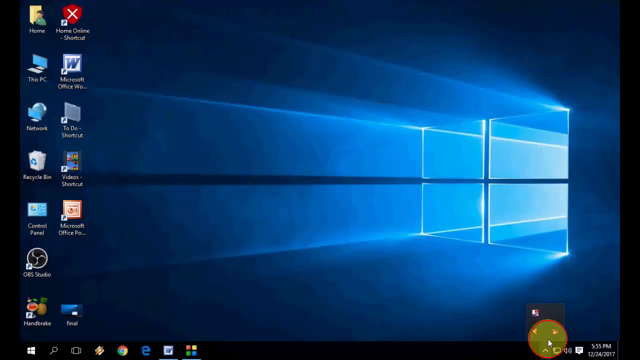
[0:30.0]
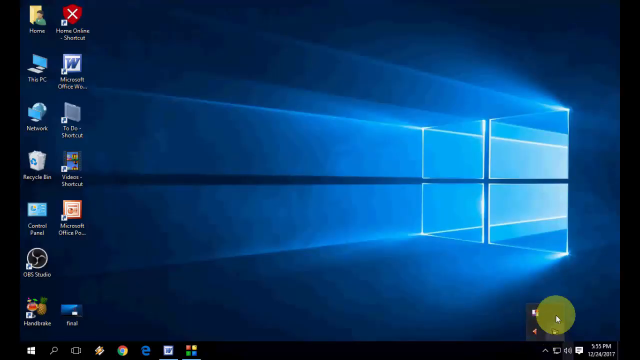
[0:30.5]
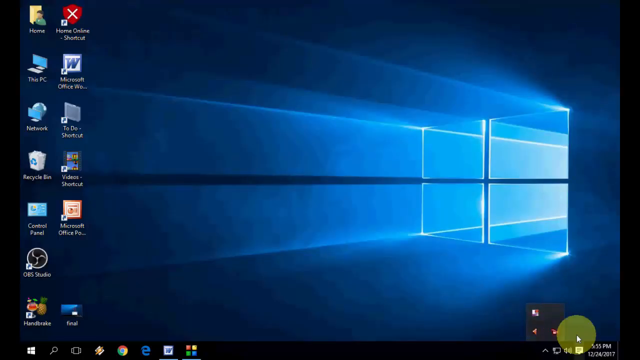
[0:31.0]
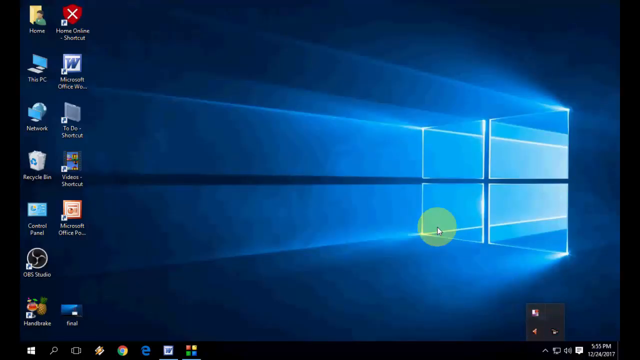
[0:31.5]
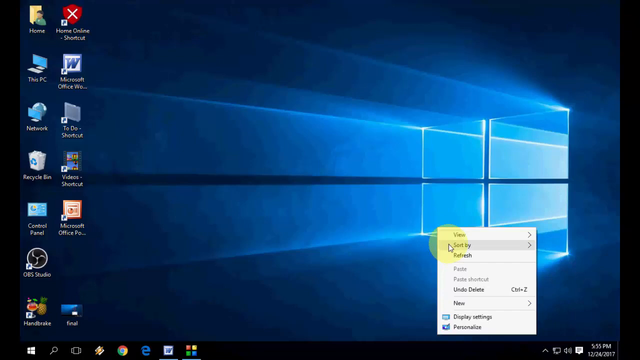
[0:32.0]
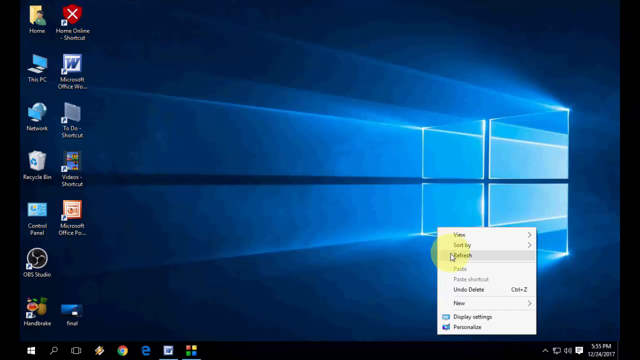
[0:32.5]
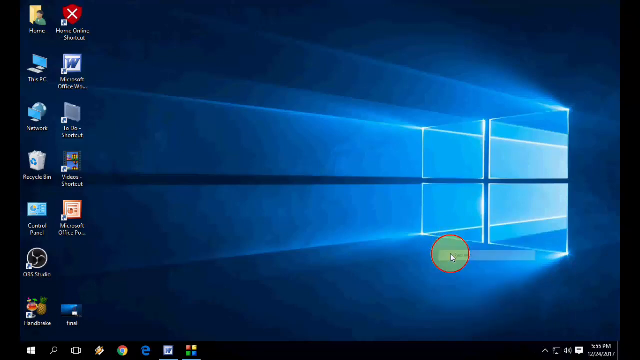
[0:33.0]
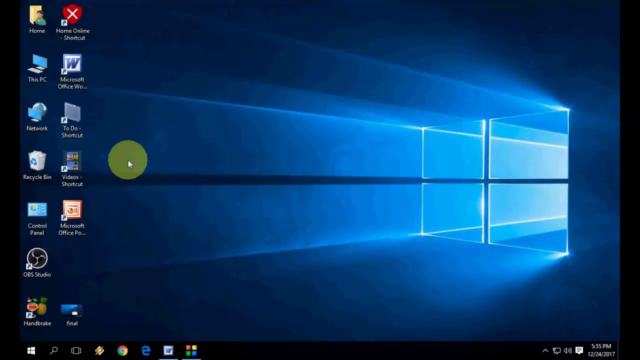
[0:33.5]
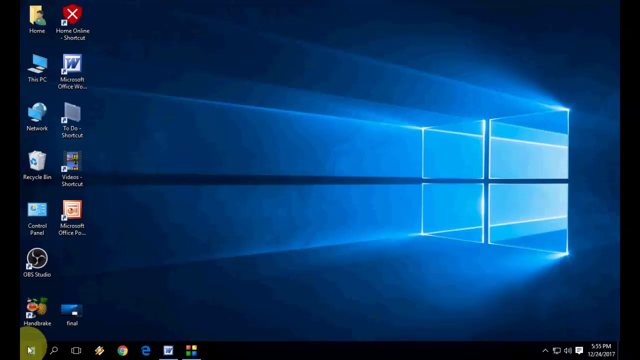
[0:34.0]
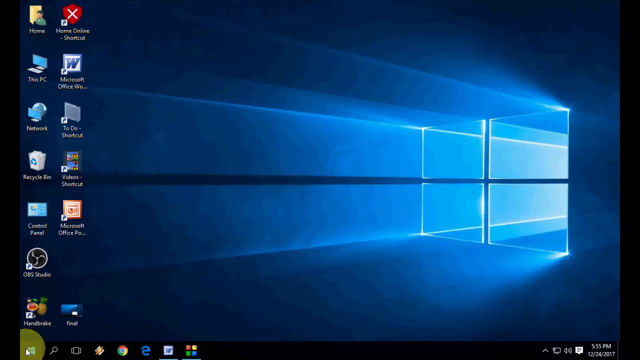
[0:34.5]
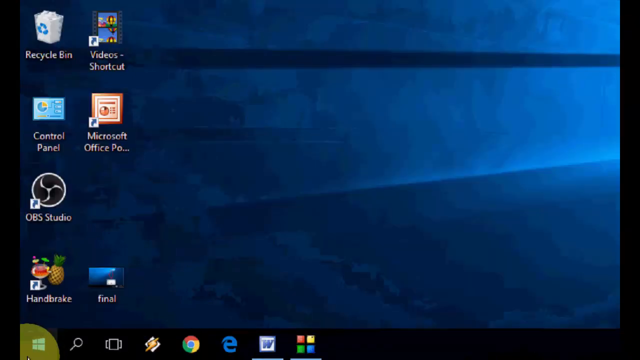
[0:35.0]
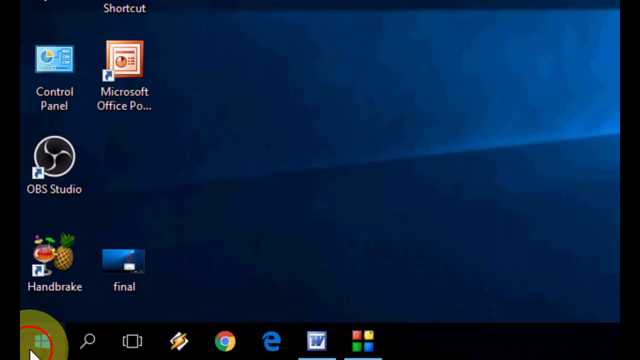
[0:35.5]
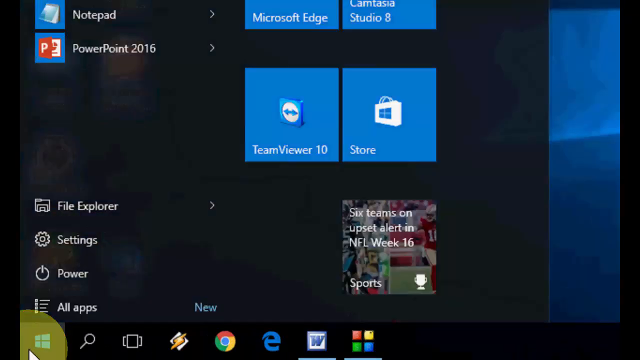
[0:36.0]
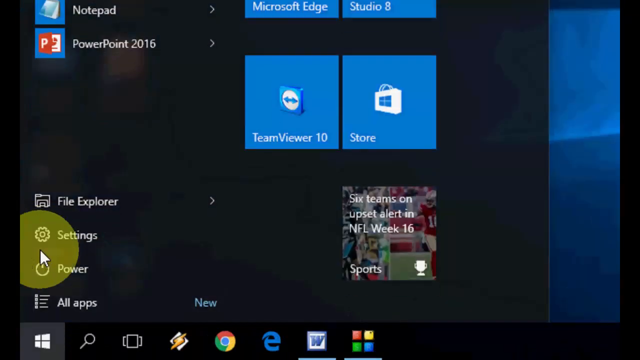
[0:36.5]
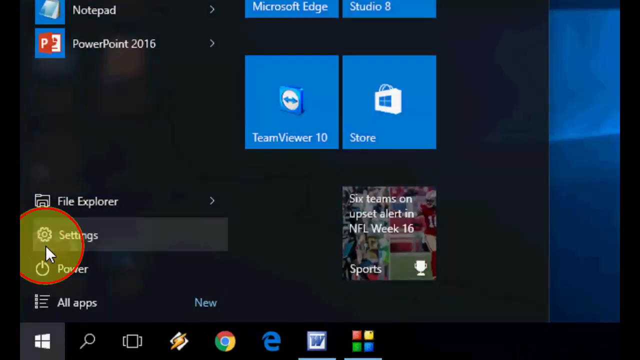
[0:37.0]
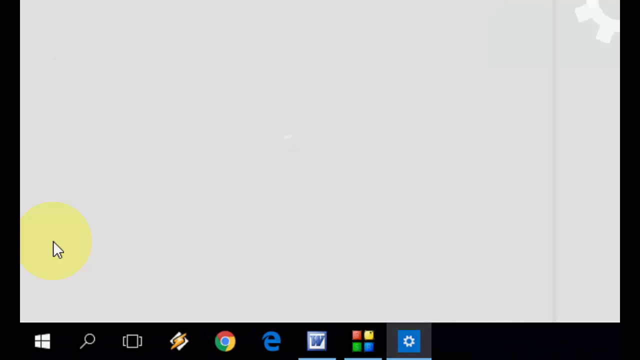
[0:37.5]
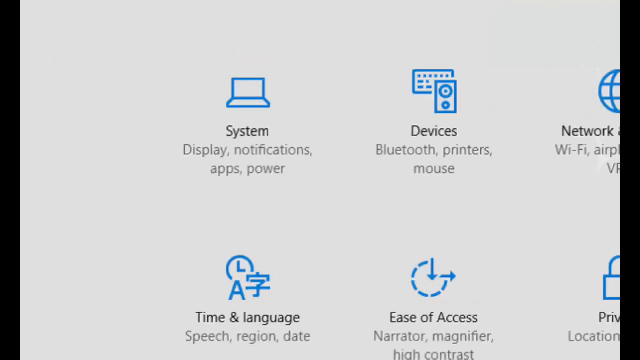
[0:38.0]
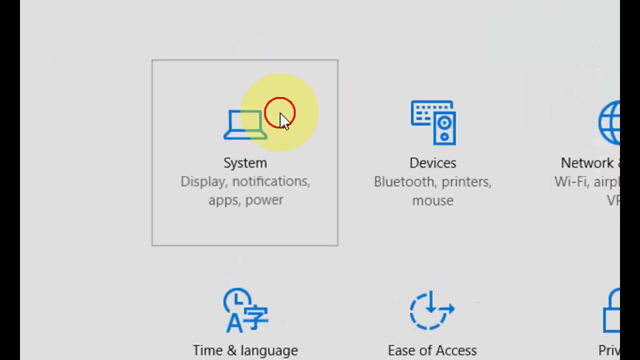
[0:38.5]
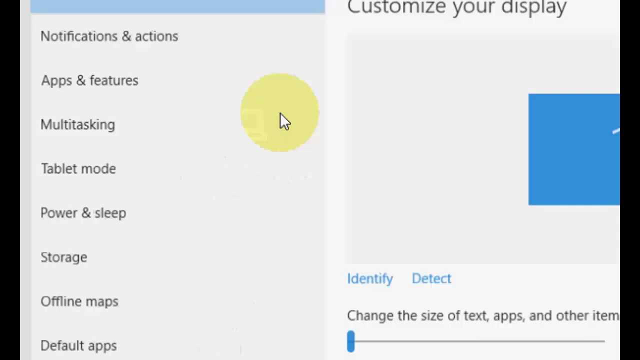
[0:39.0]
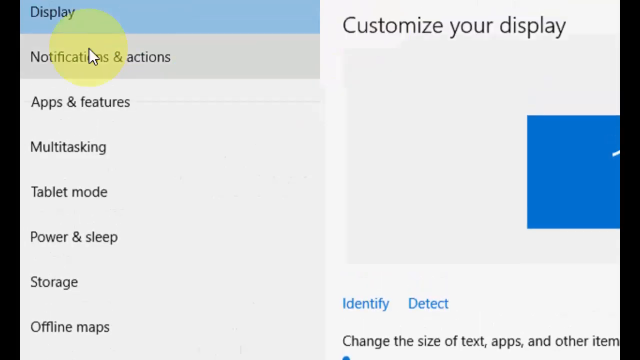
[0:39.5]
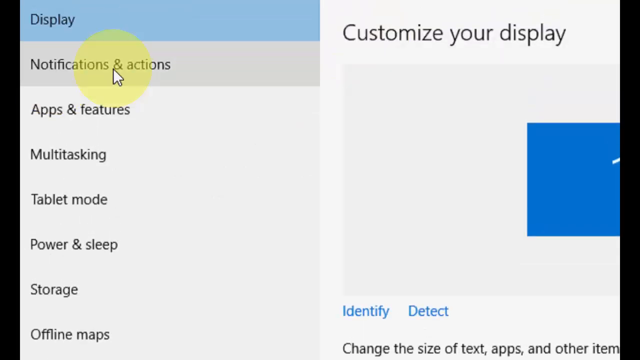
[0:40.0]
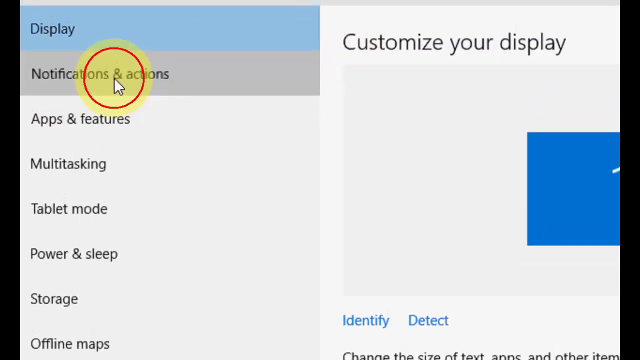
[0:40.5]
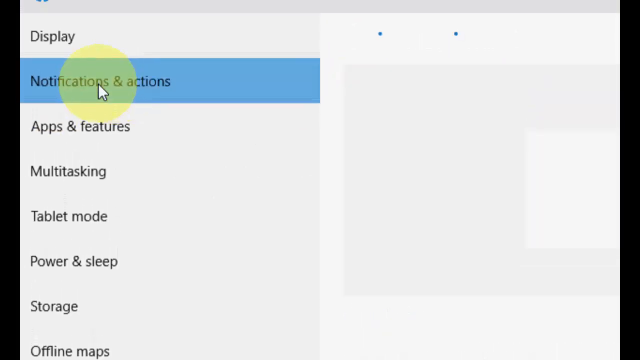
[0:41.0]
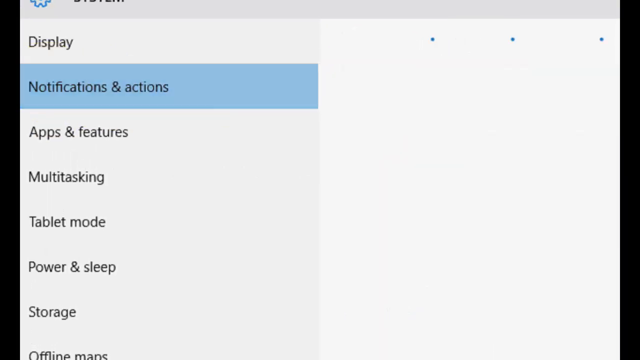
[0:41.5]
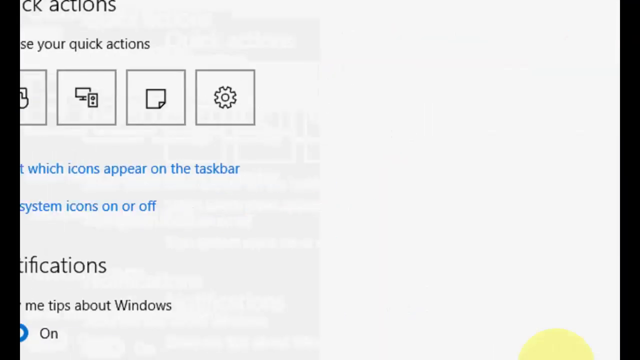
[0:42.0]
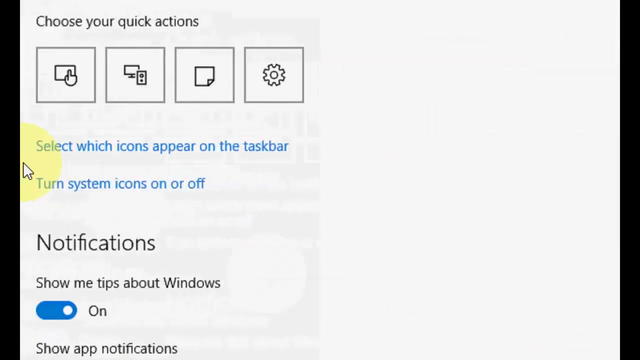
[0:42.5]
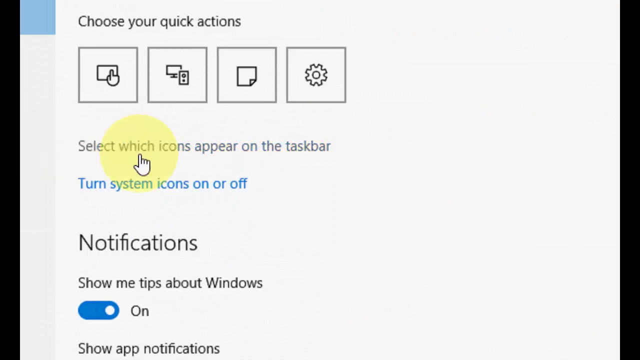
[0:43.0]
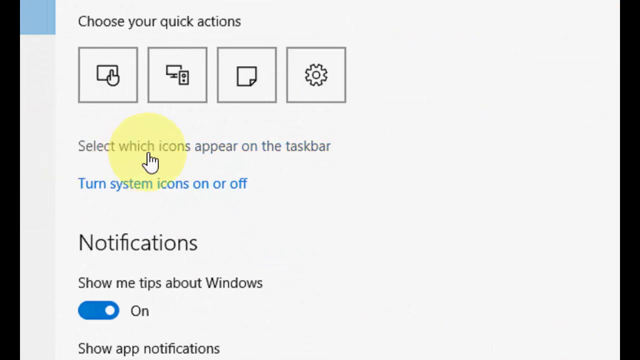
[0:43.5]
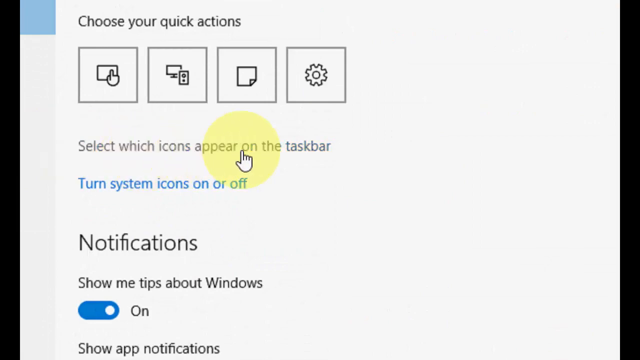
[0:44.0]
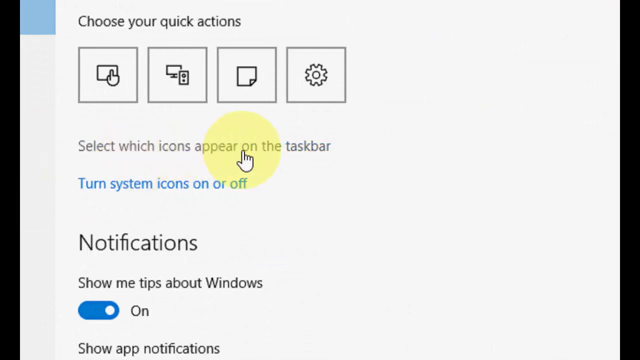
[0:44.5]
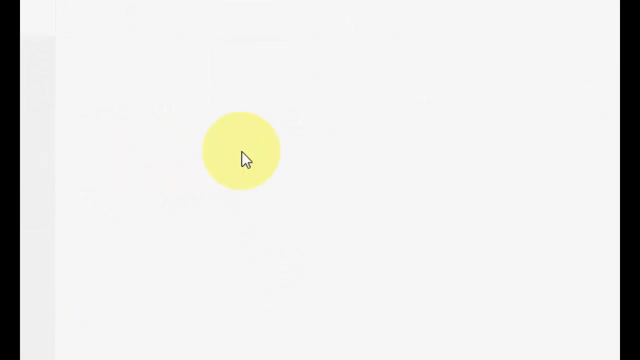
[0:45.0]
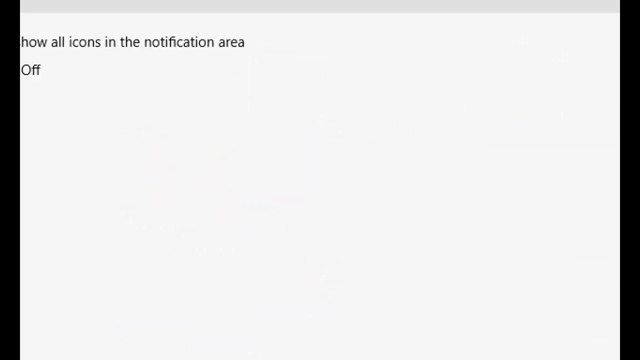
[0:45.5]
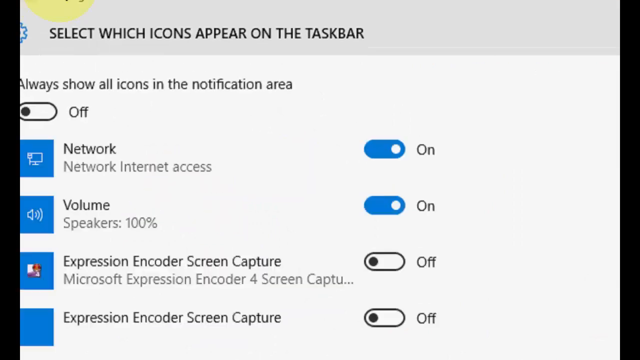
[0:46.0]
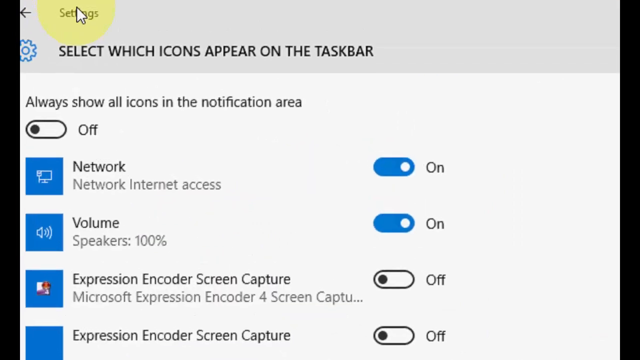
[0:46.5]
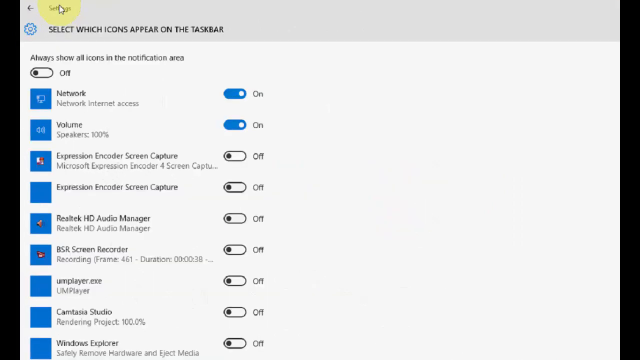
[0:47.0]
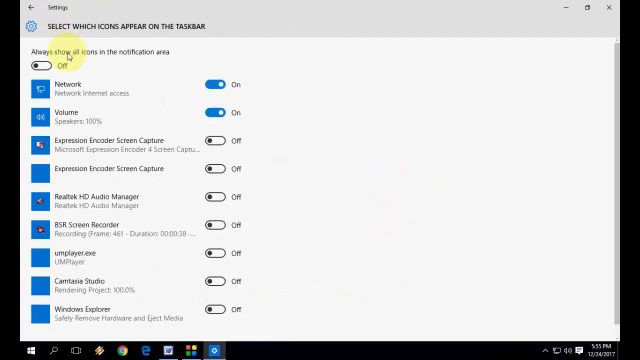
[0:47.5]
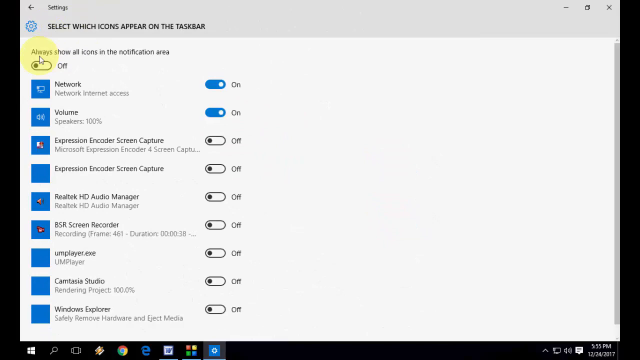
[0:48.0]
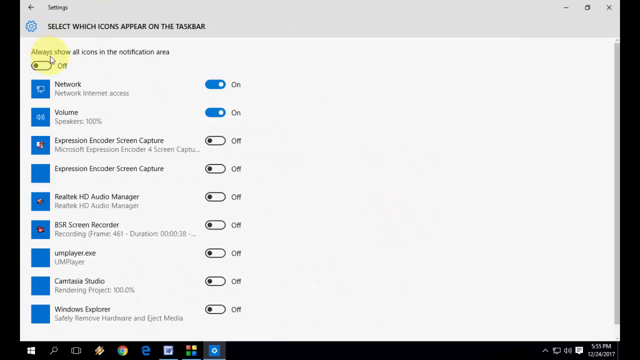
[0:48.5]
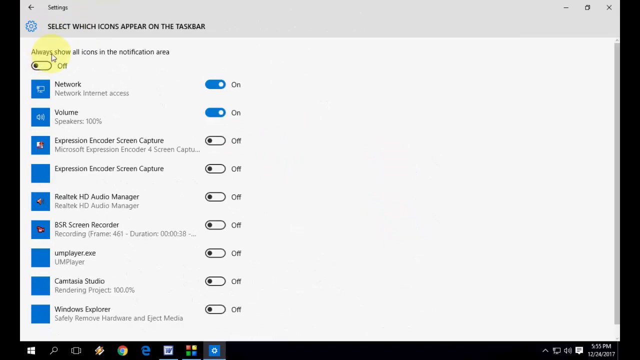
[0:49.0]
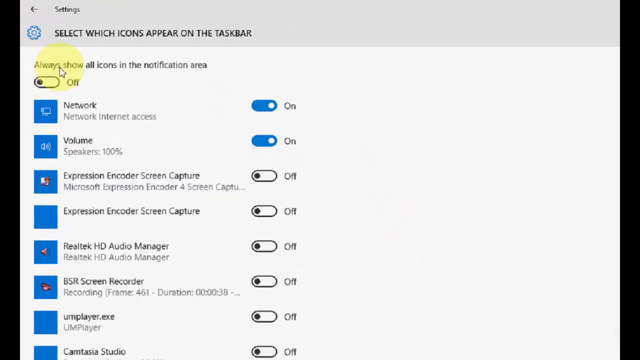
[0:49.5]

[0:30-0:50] The user is on his desktop. He first clicks on the desktop, right-clicks and refreshes. He then moves the cursor around, clicks the home button, then Settings, then System, in what seems to be Windows 10. In System he clicks on Notifications and actions, then on Select which icons appear on the taskbar, one of many options in the settings. He then shows the many icons that can be shown in the taskbar. It seems to be a tutorial about showing icons in the taskbar.